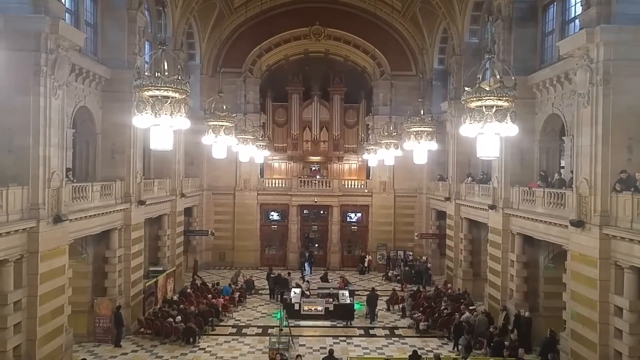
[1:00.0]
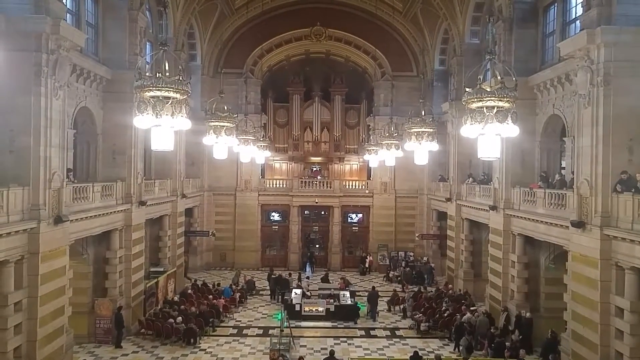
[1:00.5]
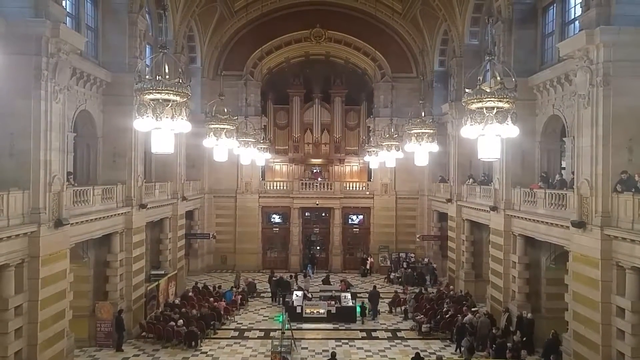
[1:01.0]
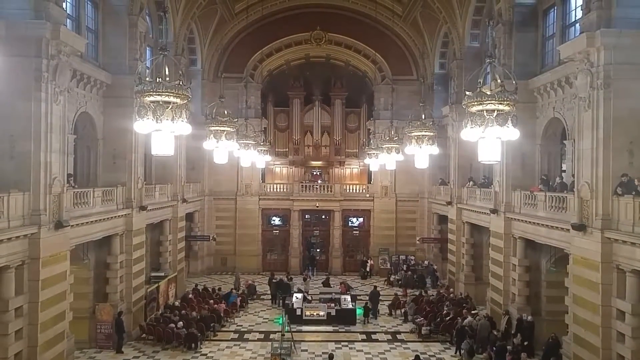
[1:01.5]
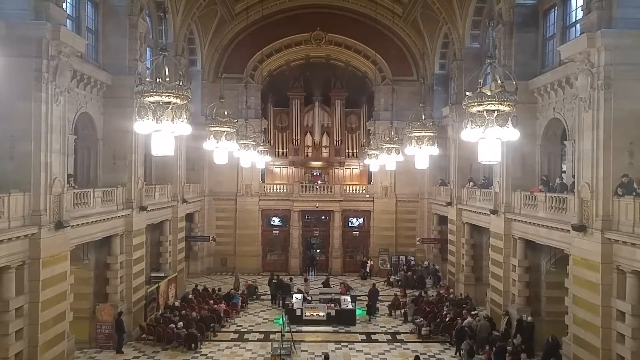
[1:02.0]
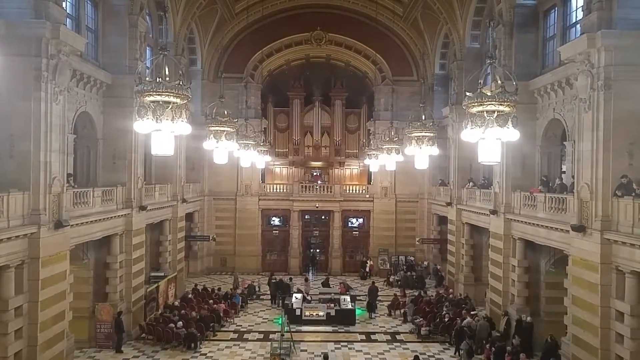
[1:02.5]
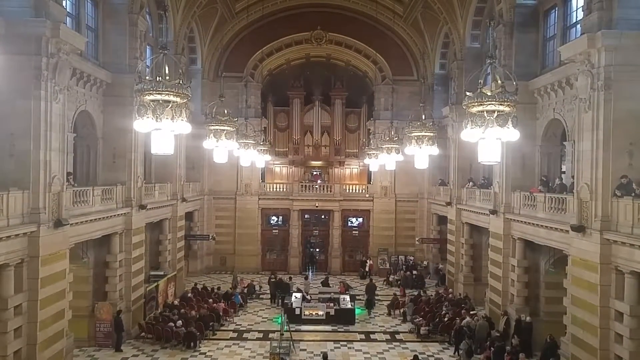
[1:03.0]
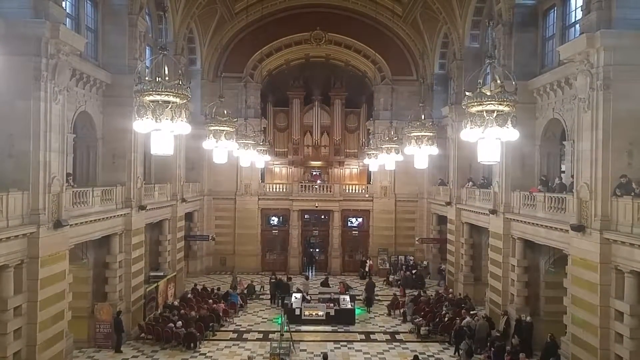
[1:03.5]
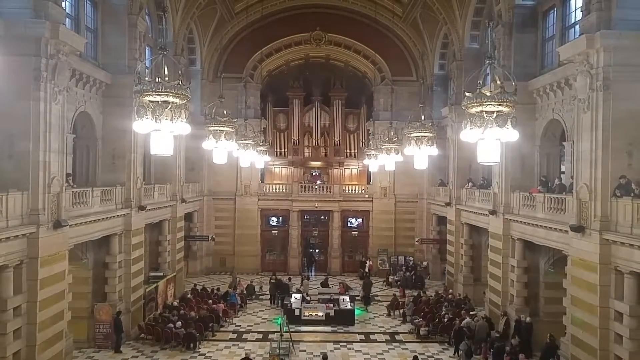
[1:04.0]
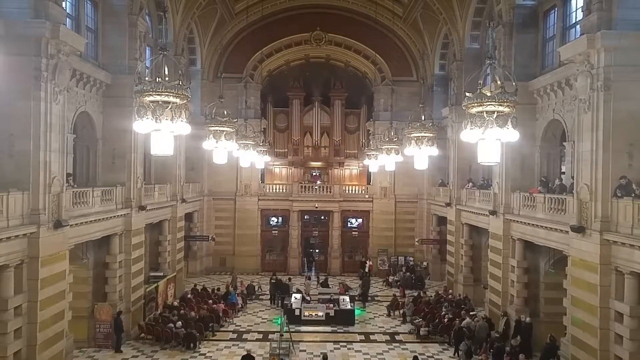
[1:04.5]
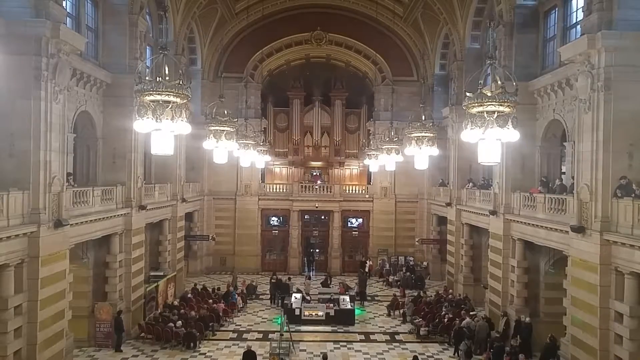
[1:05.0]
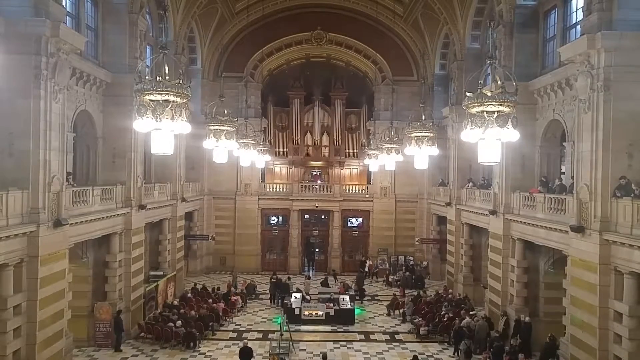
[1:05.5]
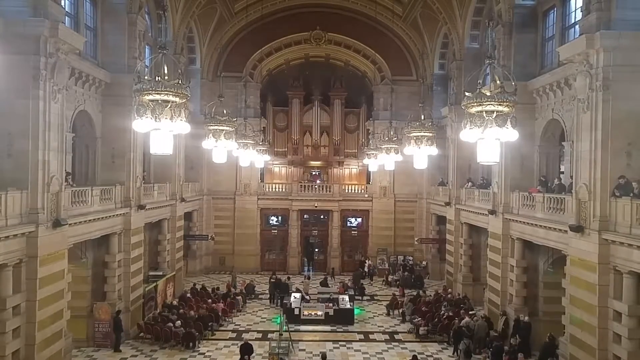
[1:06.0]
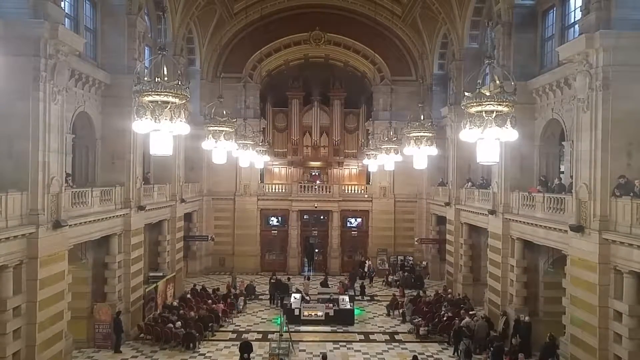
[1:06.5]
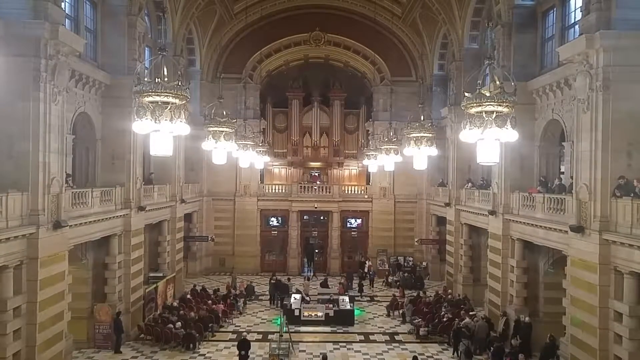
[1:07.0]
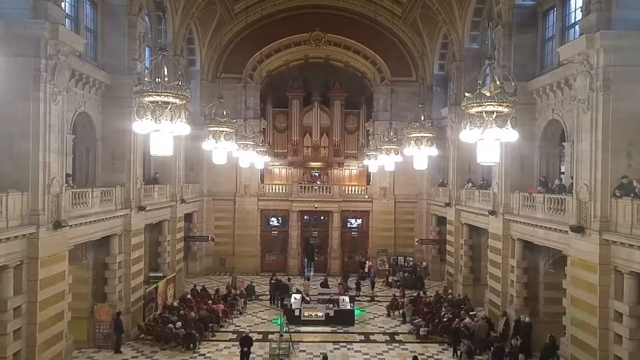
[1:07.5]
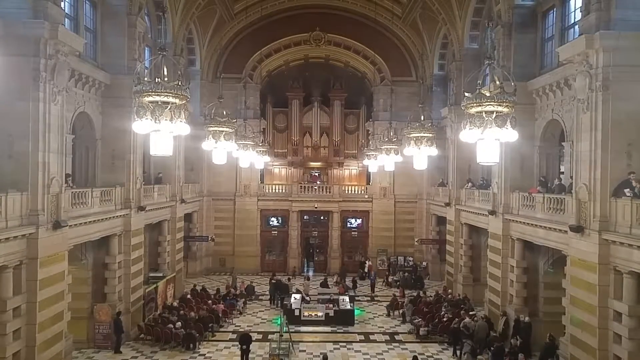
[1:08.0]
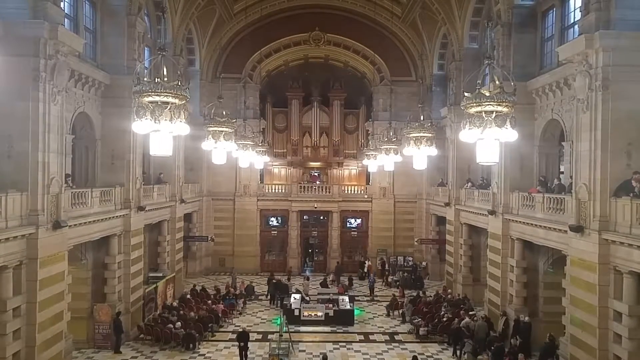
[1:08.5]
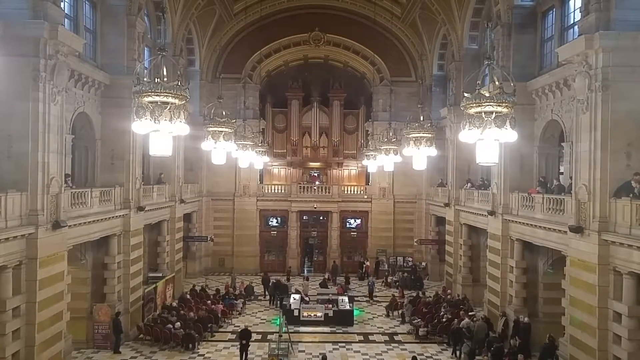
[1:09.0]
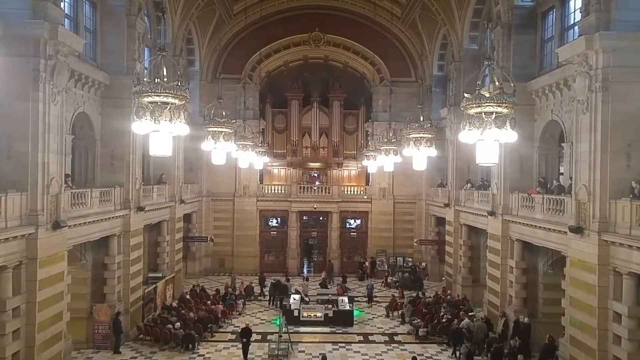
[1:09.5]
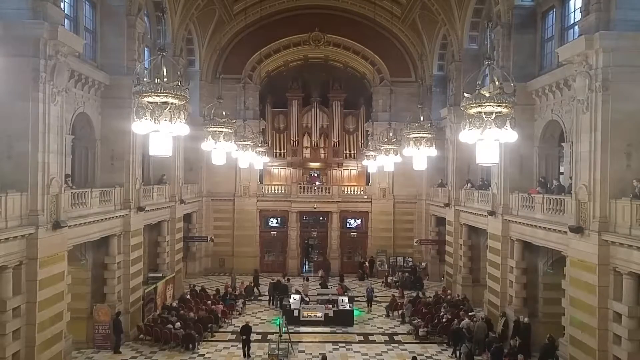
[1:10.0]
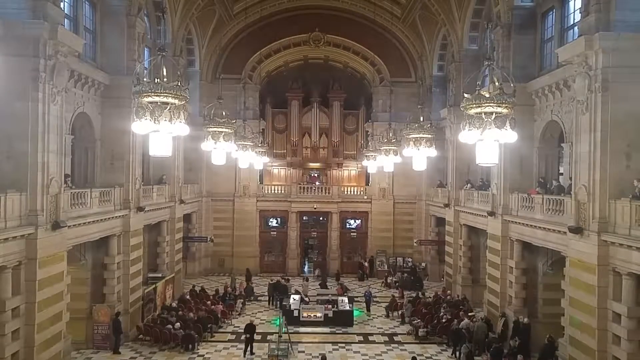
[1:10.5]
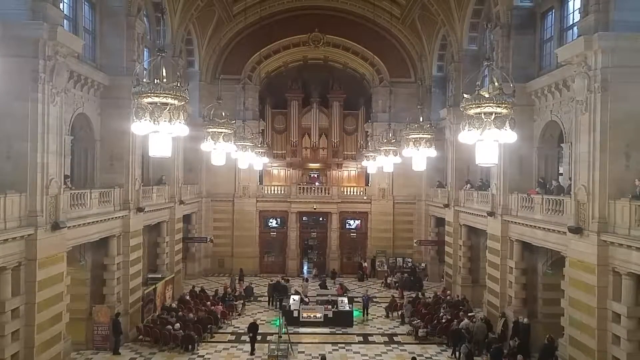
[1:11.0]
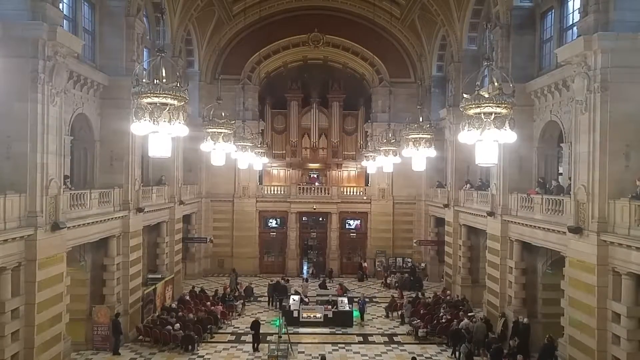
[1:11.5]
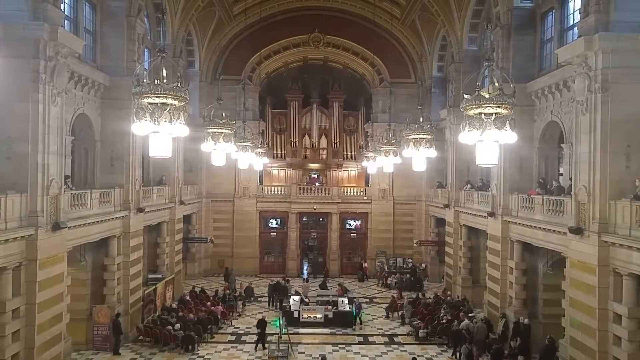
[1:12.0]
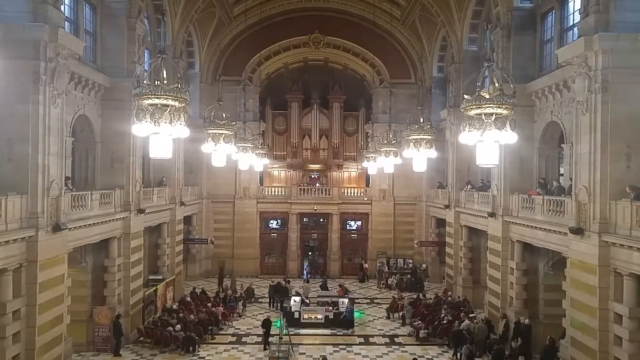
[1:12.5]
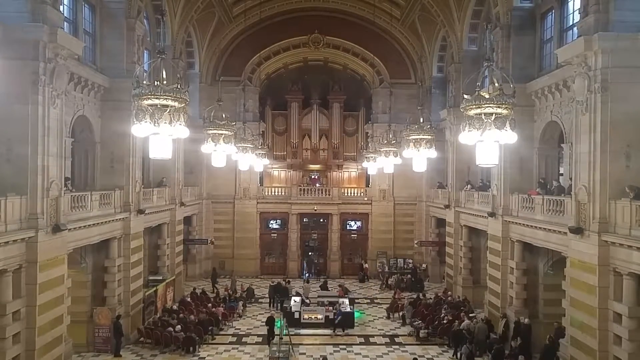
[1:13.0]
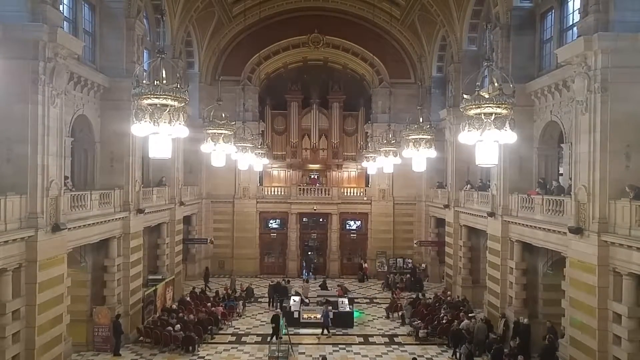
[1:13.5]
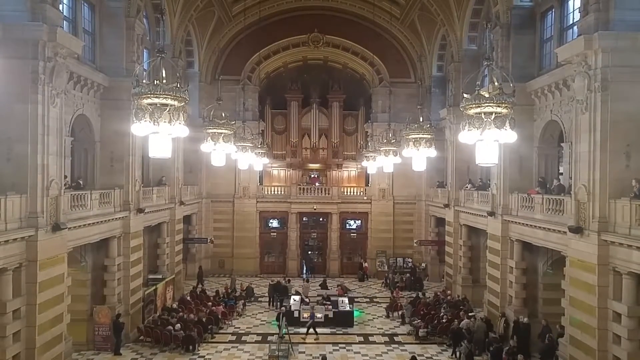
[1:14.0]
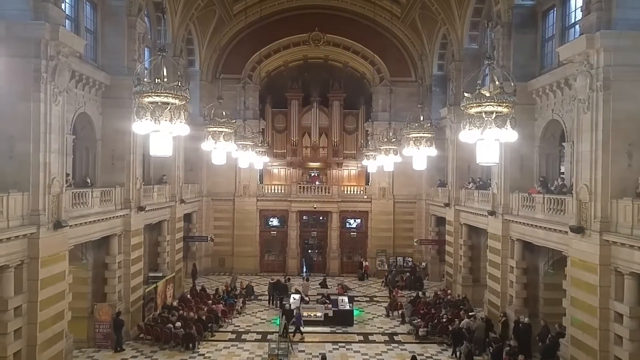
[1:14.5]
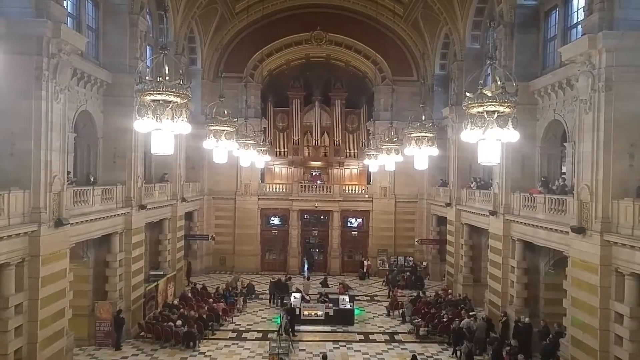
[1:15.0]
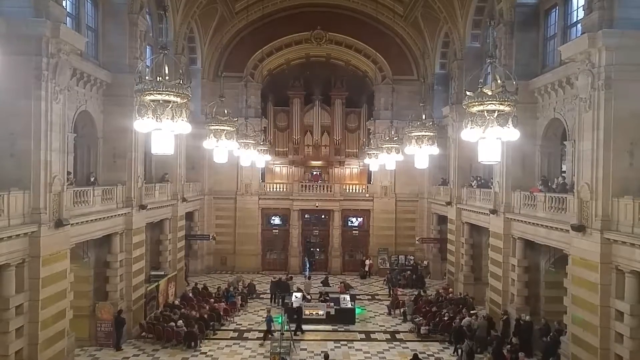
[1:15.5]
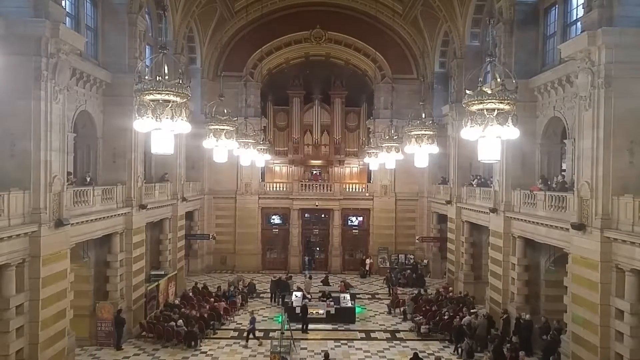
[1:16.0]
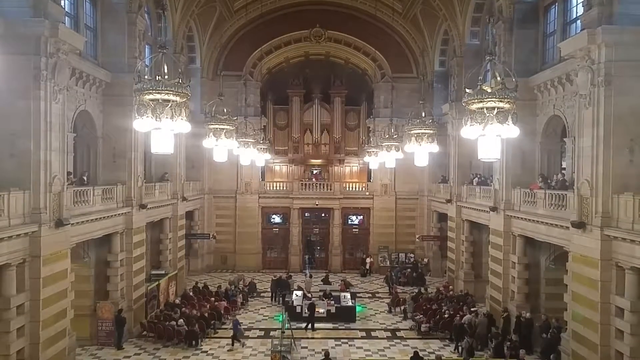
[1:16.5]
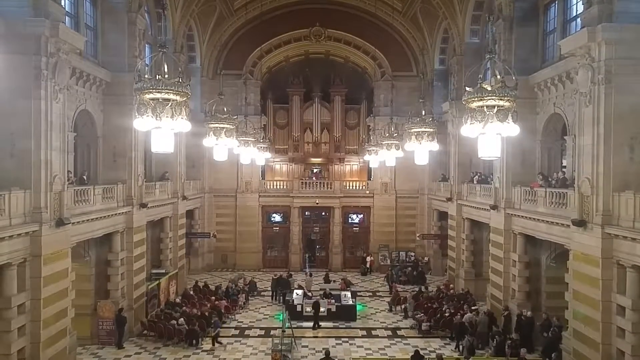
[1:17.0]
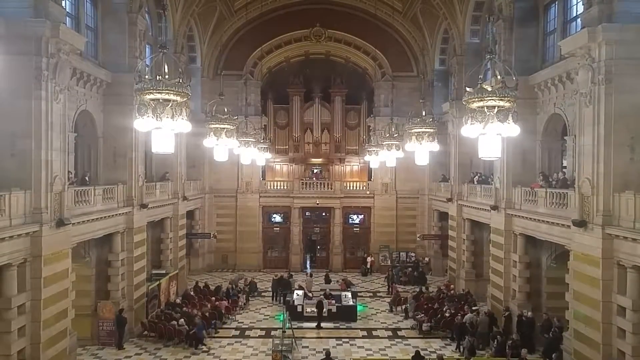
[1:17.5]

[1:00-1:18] A wide shot shows the inside of a church building. Eight long light fixtures hang down from the ceiling, illuminating the church, and there are large windows on the sides of the building. On a second floor, people are standing against the rails. The bottom floor has a diamond-like design, and all of the walls inside the church appear to be made of stone. Many people are gathered on the ground floor in seating arrangements on both sides of the church. In the center there is a table with people at it, and there are people next to the entrance of the church. At the entrance are three brown, rectangular wooden doors.